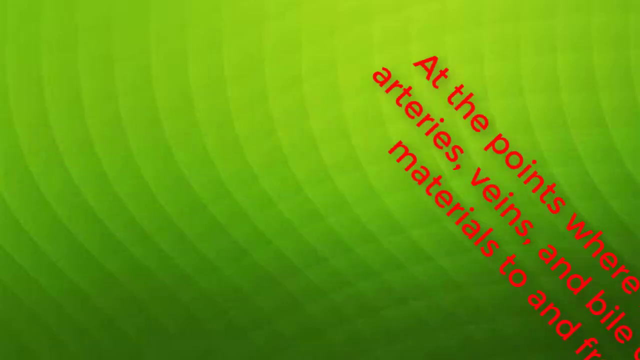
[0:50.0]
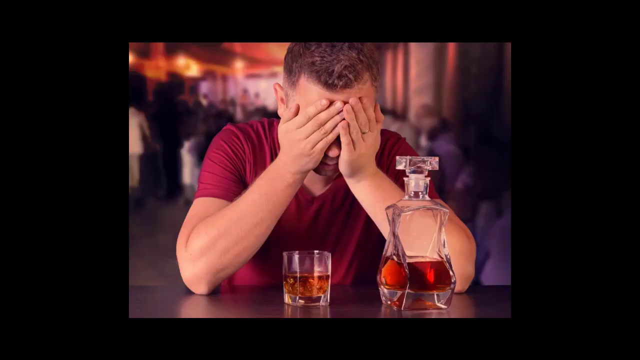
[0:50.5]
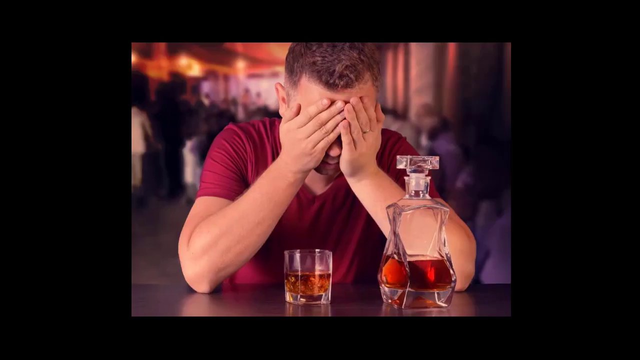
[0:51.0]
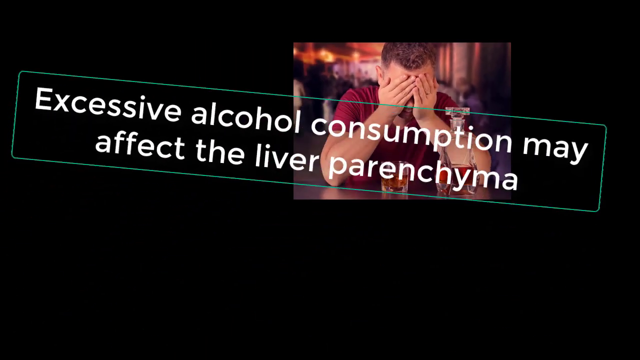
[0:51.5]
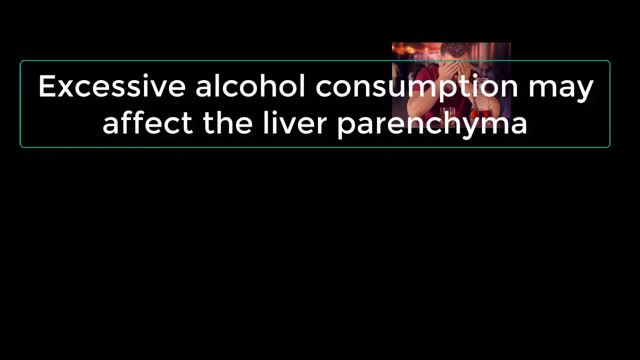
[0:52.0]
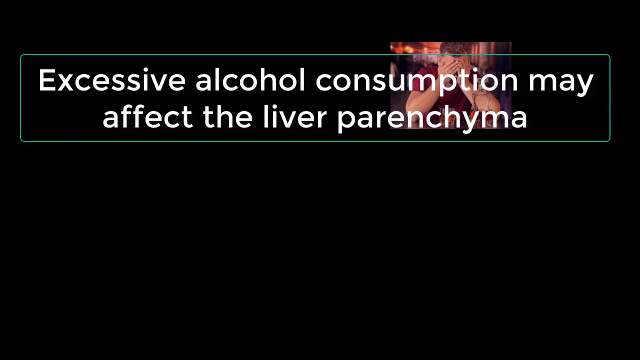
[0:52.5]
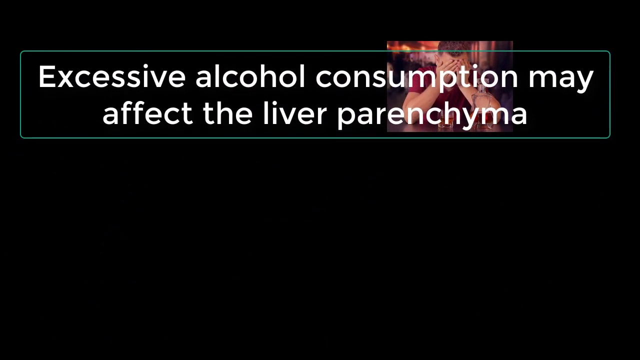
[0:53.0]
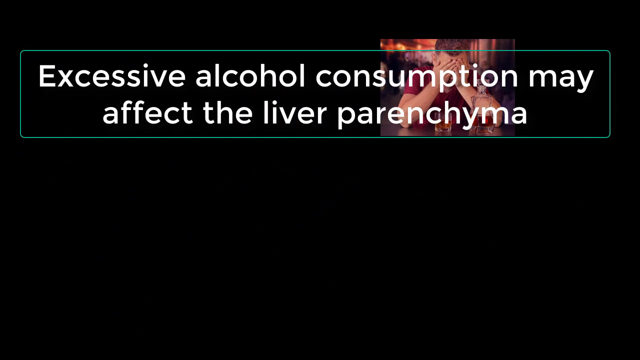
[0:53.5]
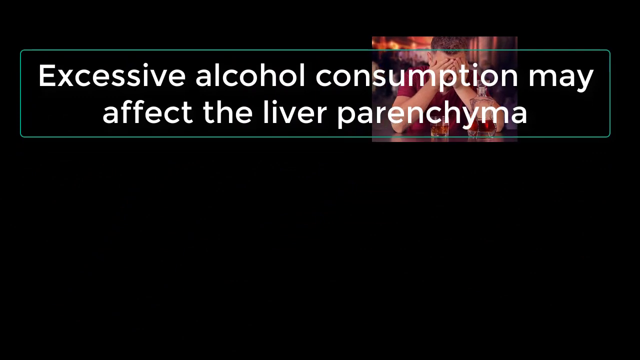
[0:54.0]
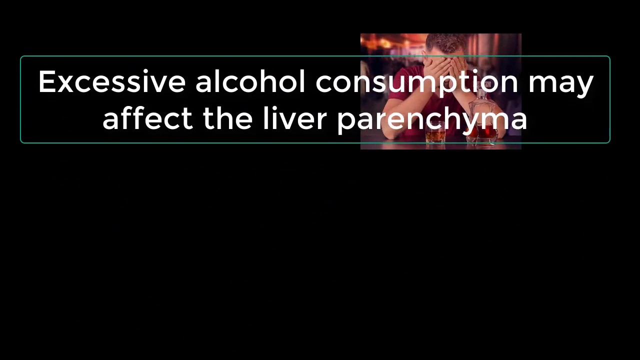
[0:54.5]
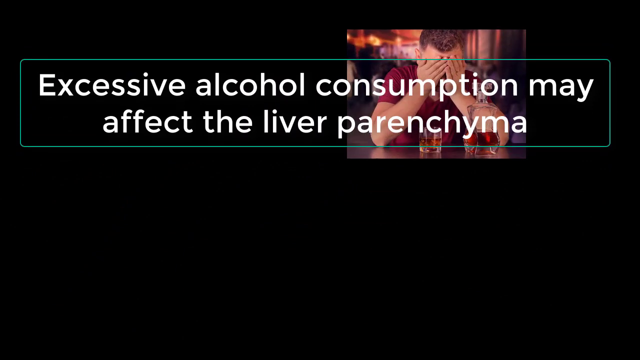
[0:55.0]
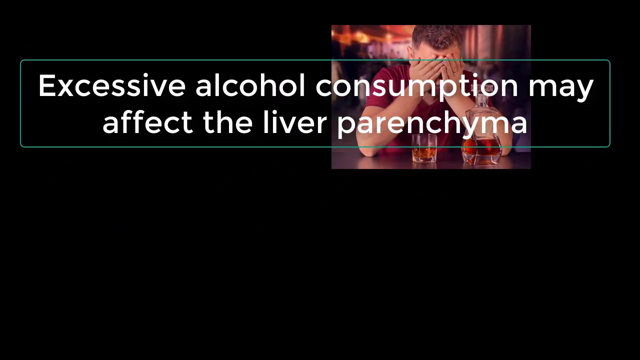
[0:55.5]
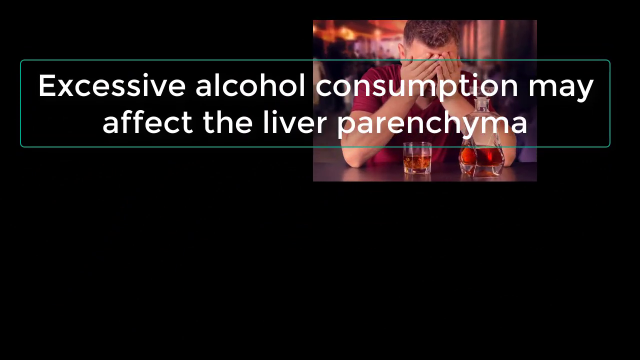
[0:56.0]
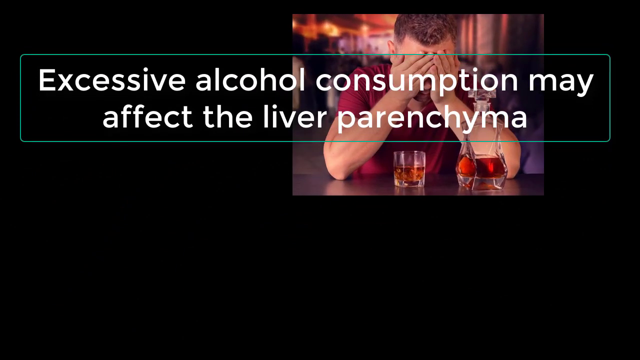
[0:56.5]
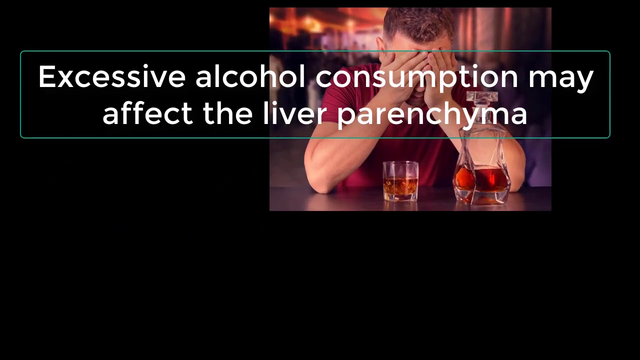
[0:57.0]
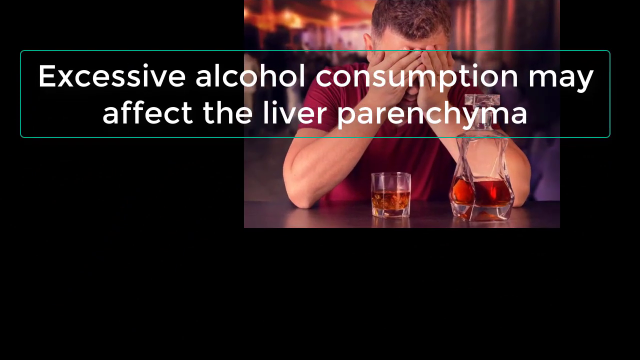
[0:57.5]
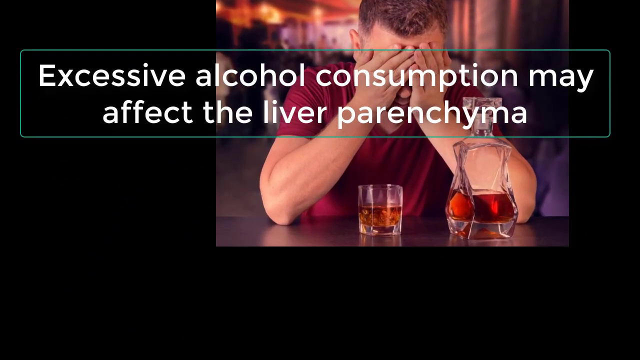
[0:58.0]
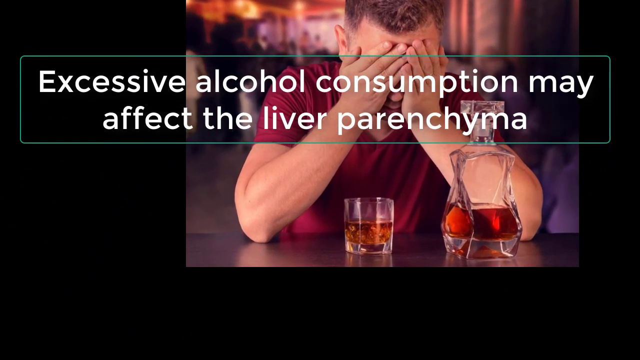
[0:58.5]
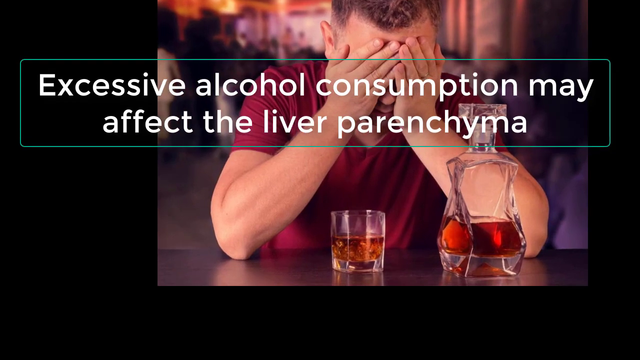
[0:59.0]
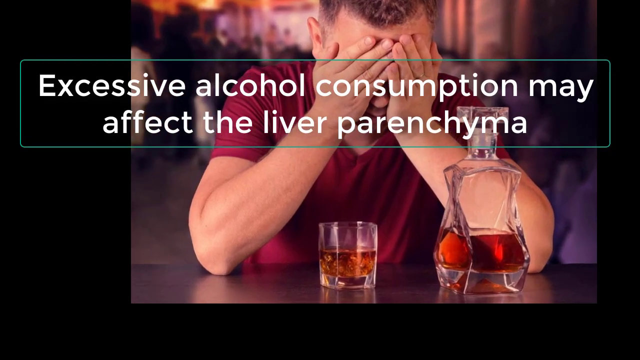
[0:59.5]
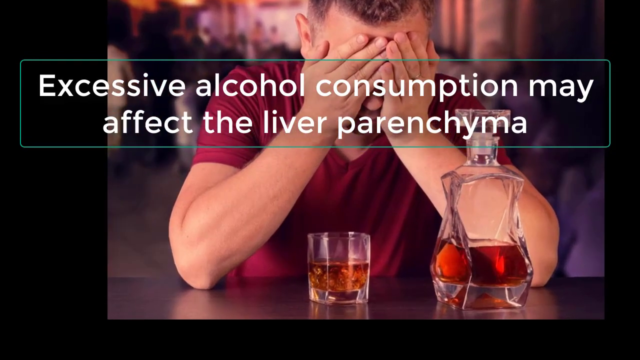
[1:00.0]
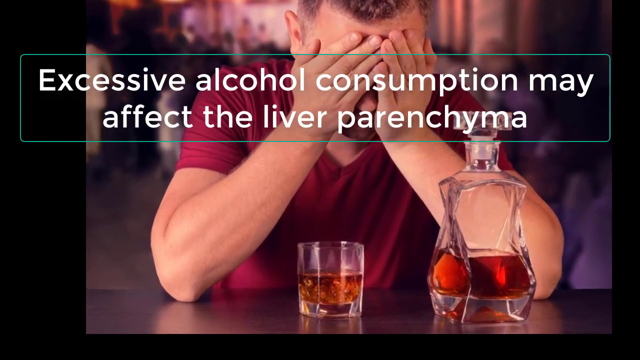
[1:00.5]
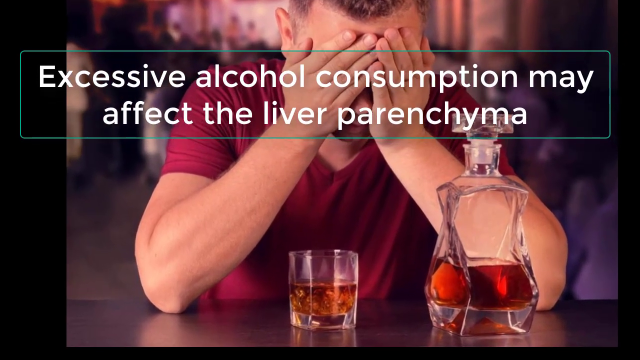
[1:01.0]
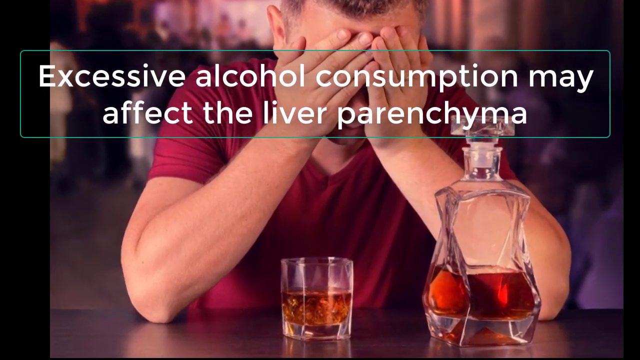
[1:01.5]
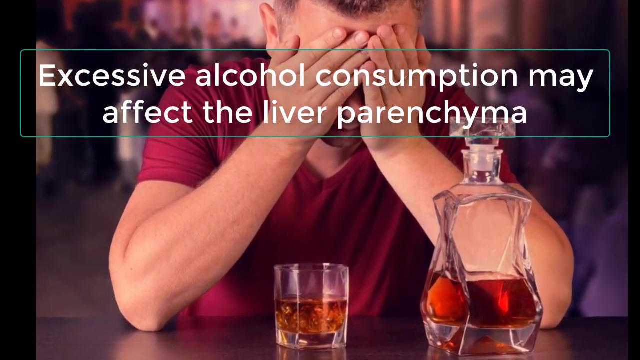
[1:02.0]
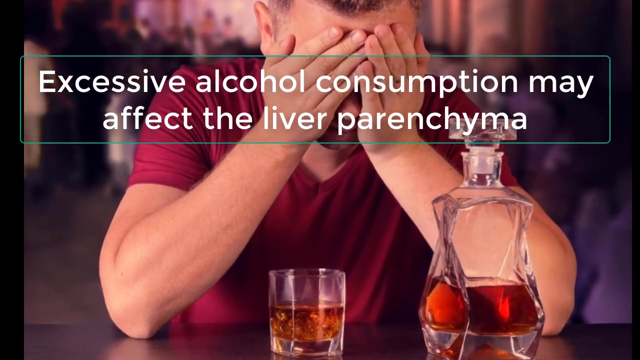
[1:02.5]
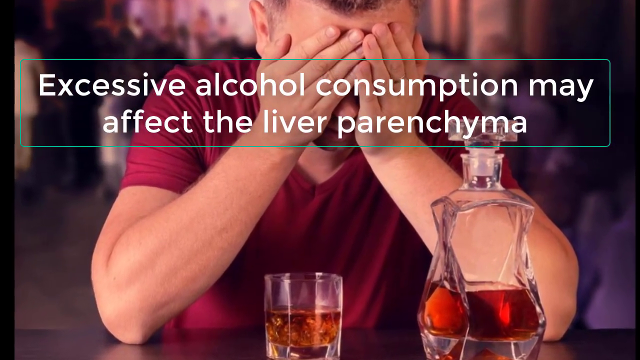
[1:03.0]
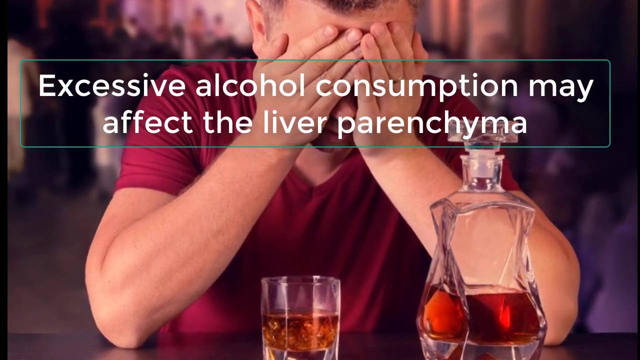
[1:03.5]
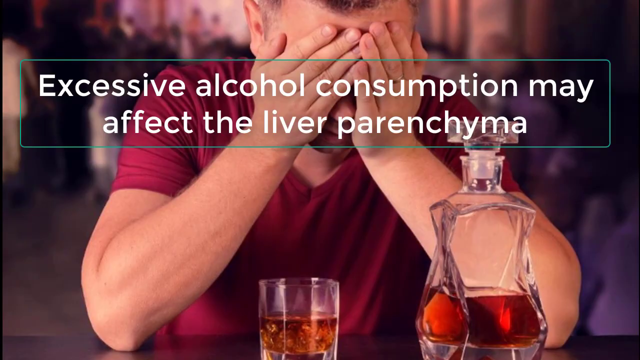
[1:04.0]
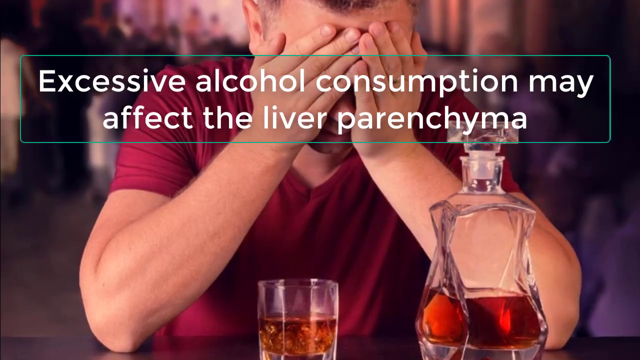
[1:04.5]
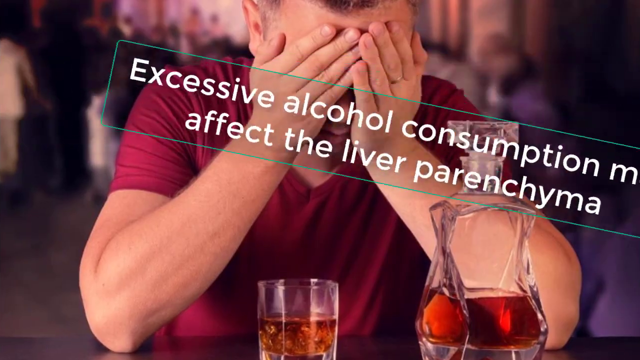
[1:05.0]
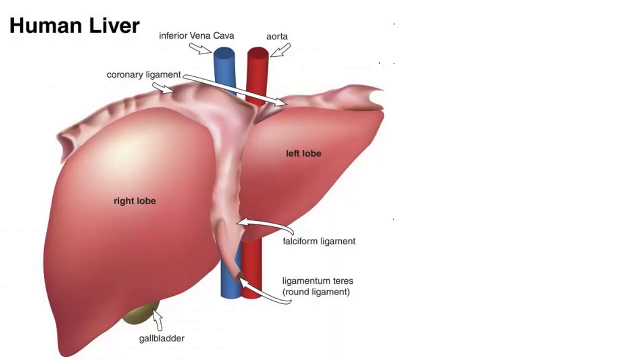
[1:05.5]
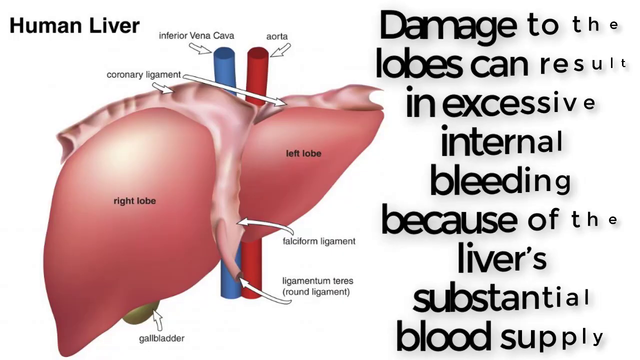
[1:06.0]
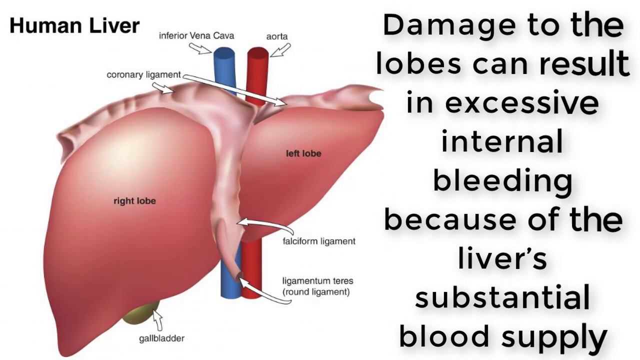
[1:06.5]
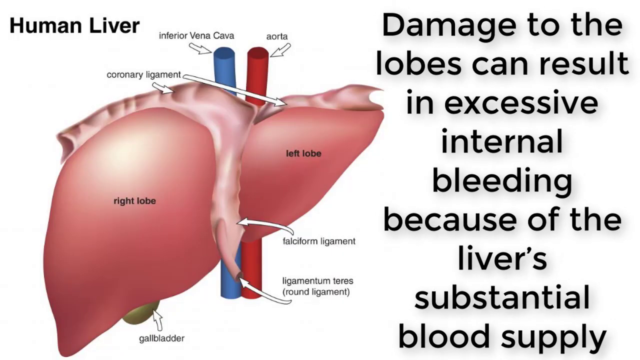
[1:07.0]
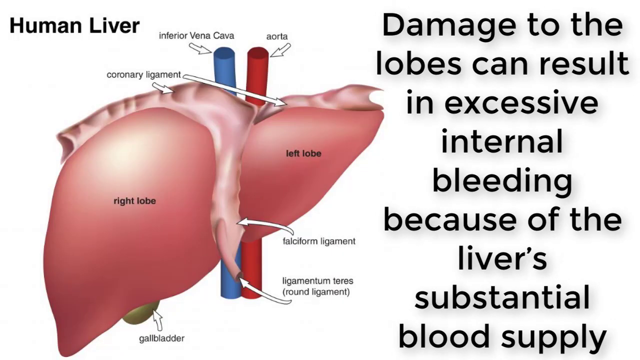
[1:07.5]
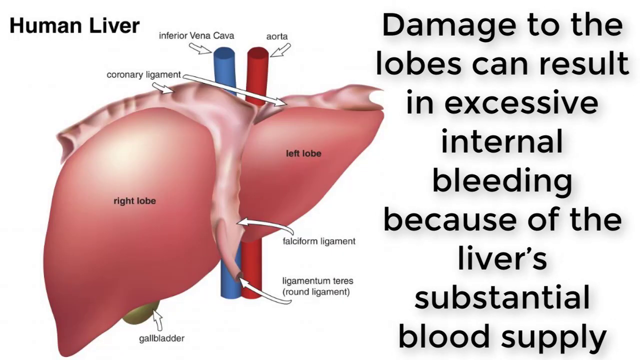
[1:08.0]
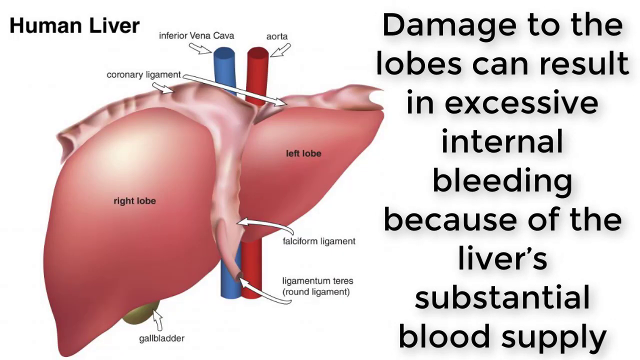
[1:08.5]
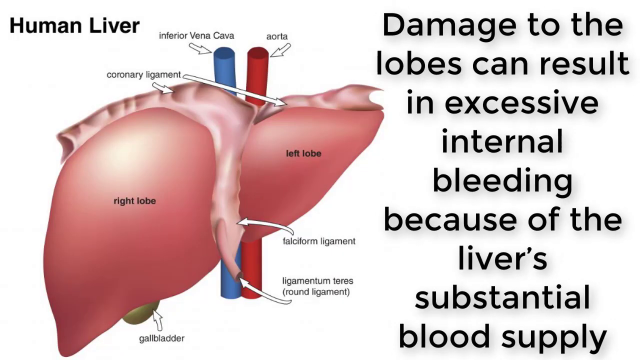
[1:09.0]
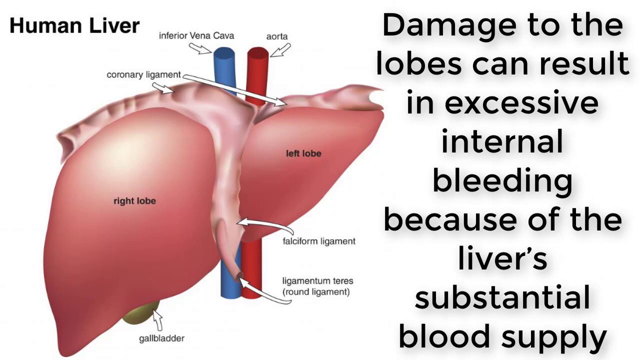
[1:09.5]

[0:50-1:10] A slide with red words in the foreground flies to the right and disappears. A man then appears, seemingly in front of a bar with a kind of black counter. On the counter is a clear glass bottle of alcohol and a glass that is half full. The man has both hands up on his face, covering his eyes. White text kind of flies from left to right and takes over the whole screen, while the picture of the man shrinks and moves to the top part of the screen. The white text begins "excessive alcohol consumption may affect the liver".